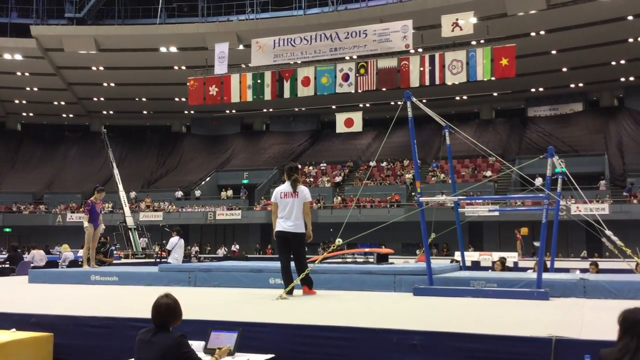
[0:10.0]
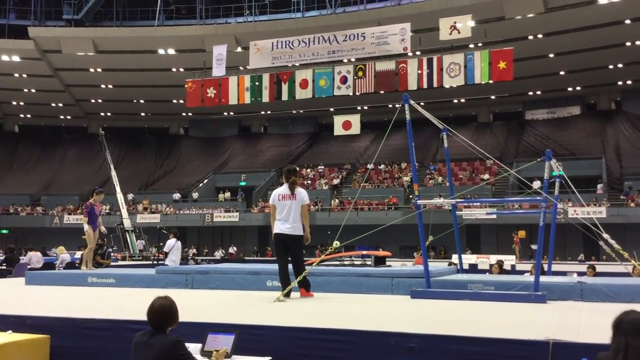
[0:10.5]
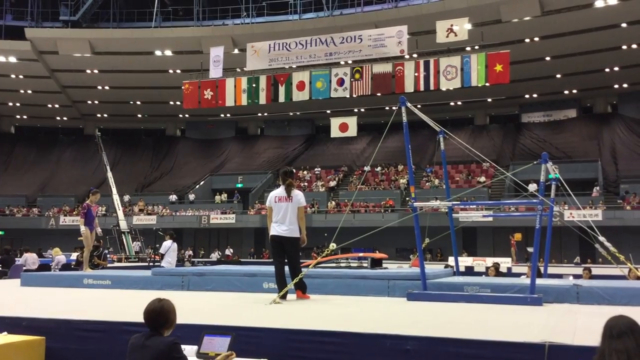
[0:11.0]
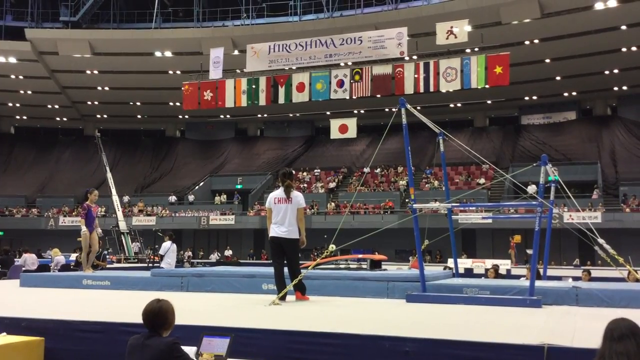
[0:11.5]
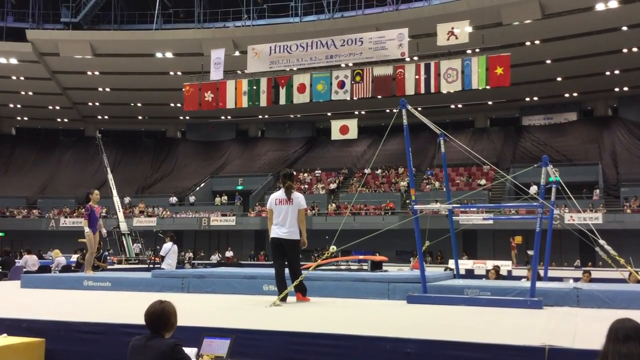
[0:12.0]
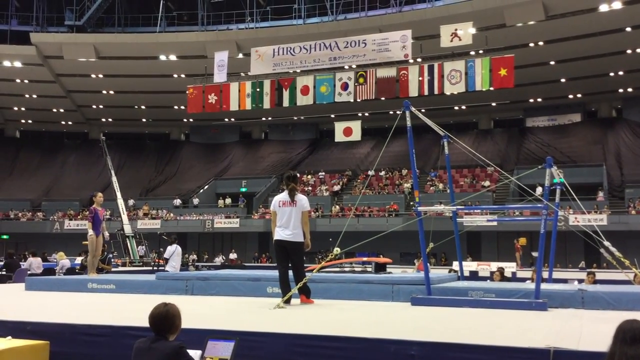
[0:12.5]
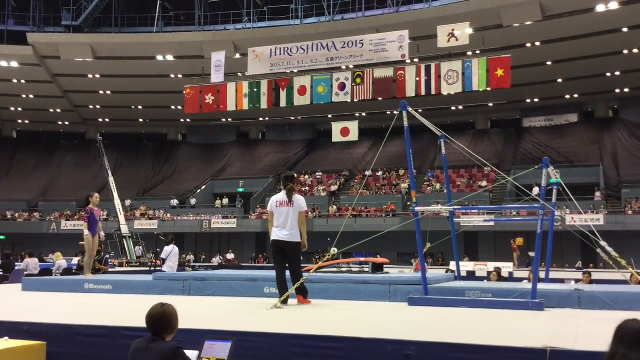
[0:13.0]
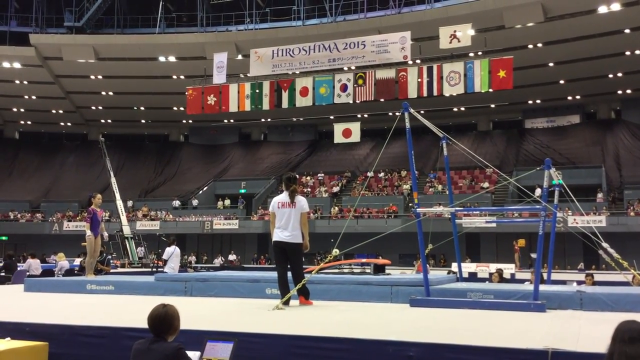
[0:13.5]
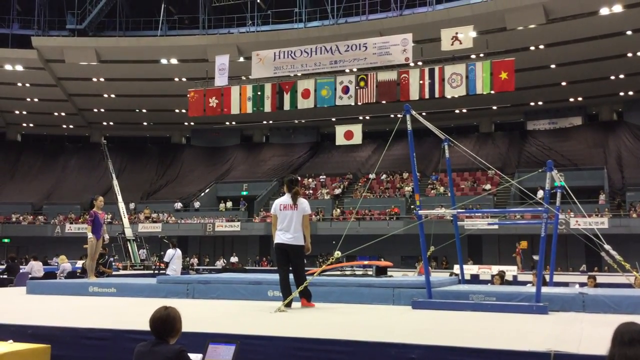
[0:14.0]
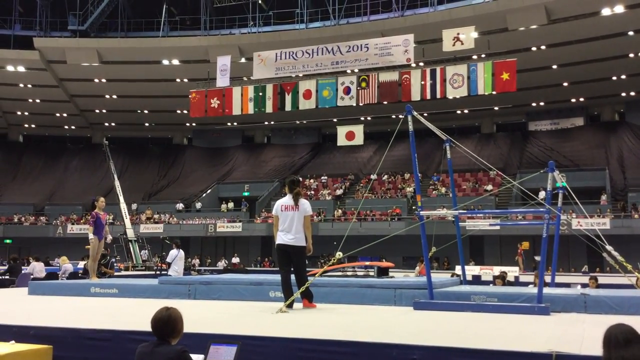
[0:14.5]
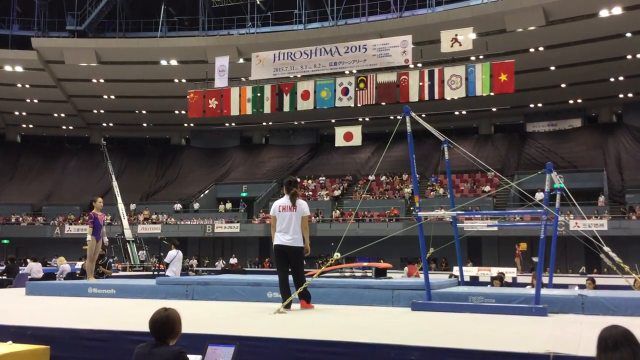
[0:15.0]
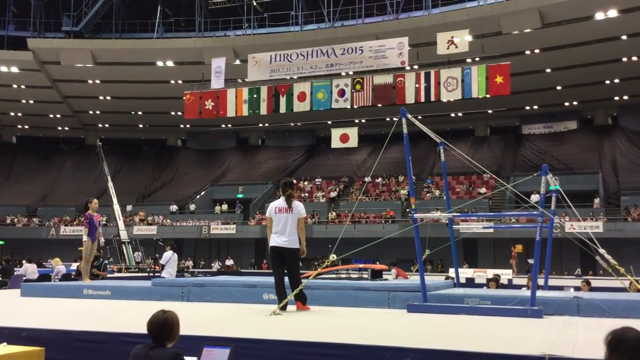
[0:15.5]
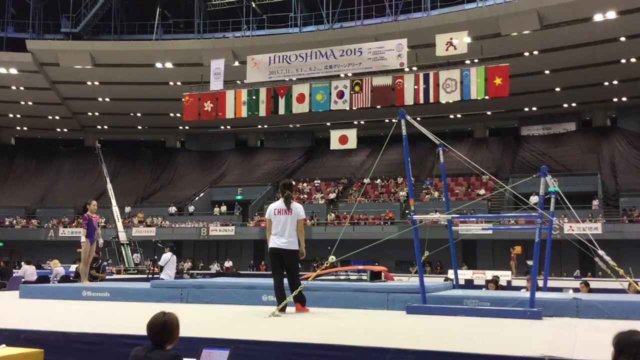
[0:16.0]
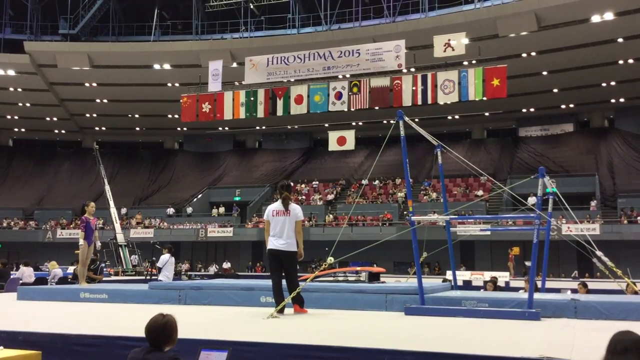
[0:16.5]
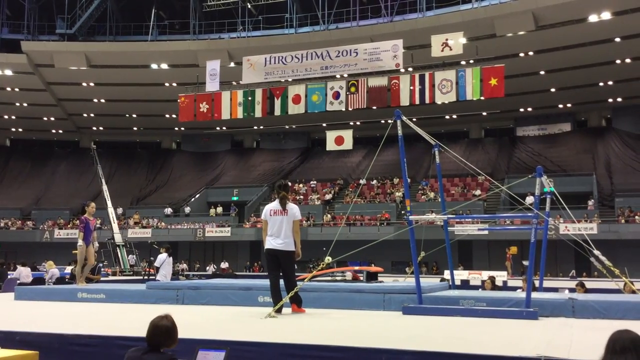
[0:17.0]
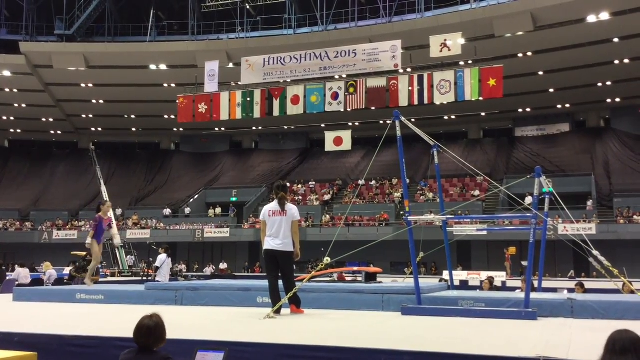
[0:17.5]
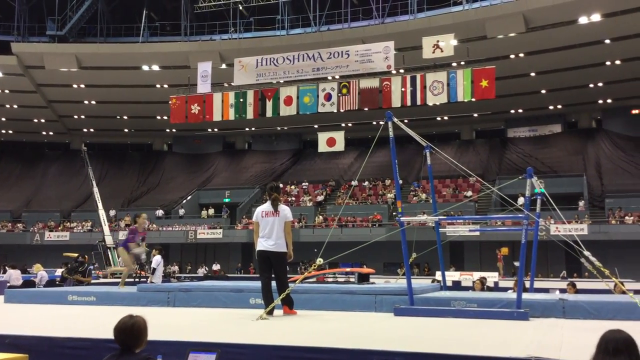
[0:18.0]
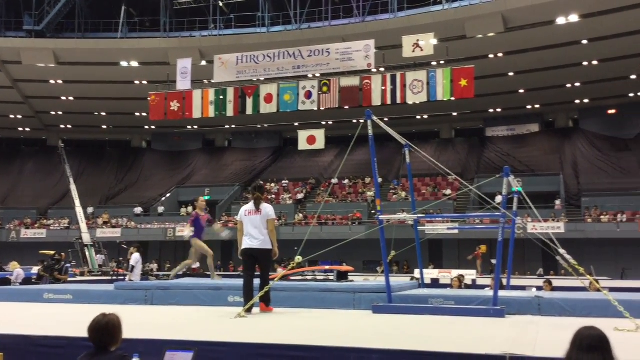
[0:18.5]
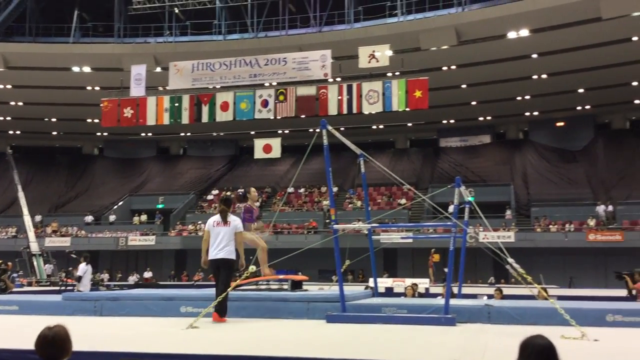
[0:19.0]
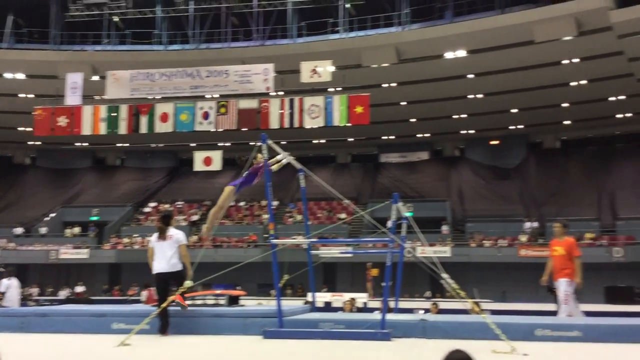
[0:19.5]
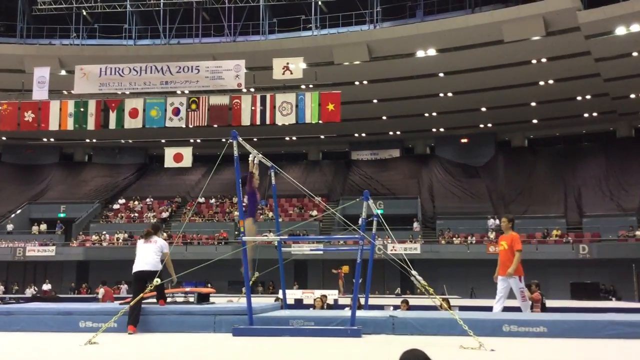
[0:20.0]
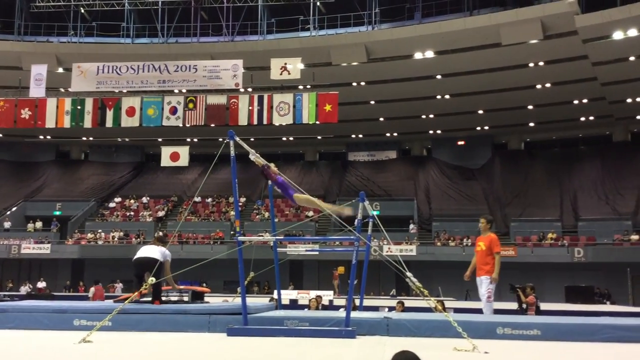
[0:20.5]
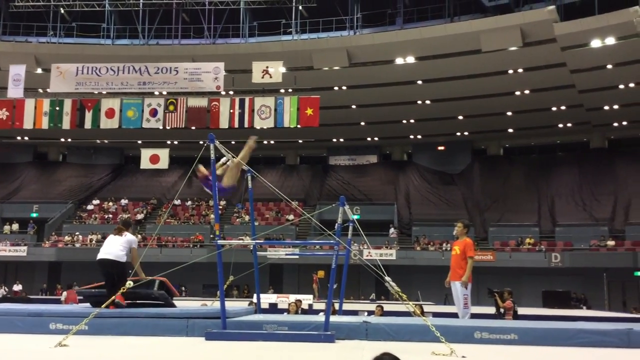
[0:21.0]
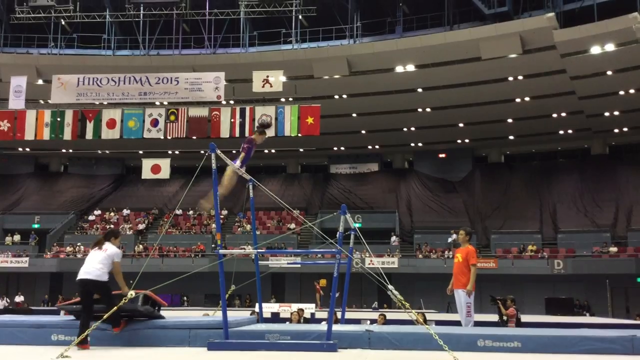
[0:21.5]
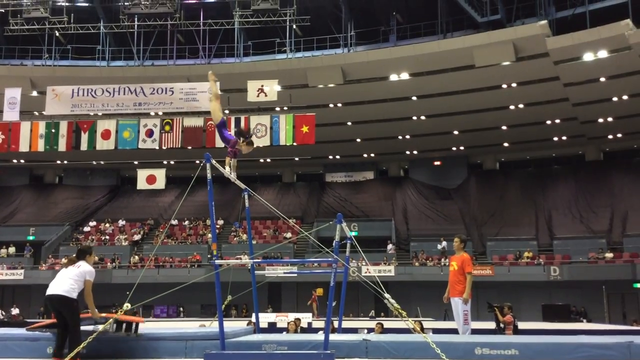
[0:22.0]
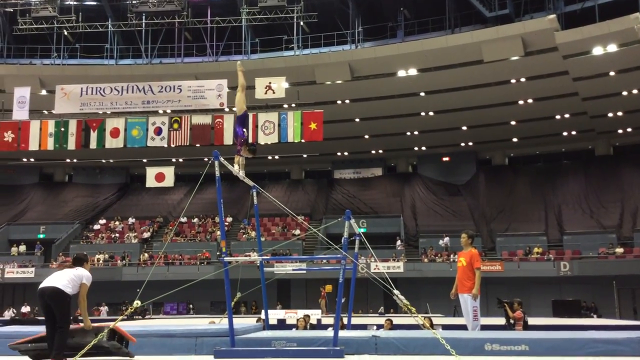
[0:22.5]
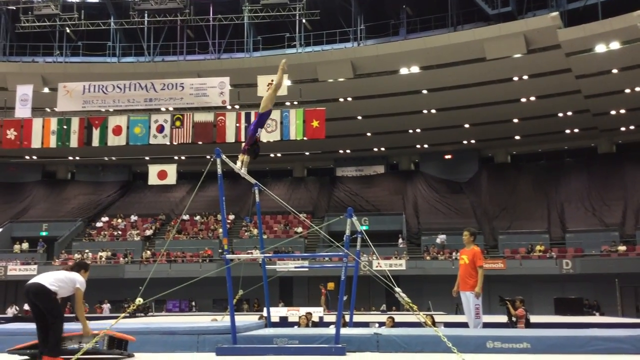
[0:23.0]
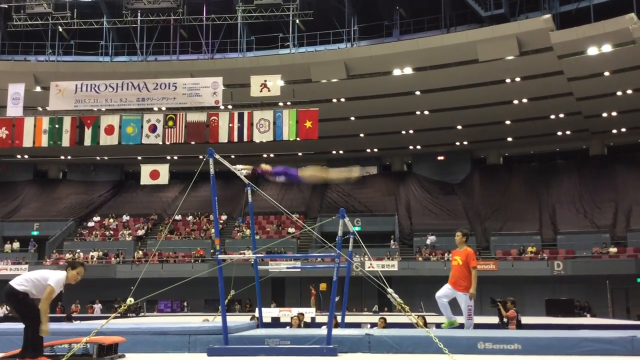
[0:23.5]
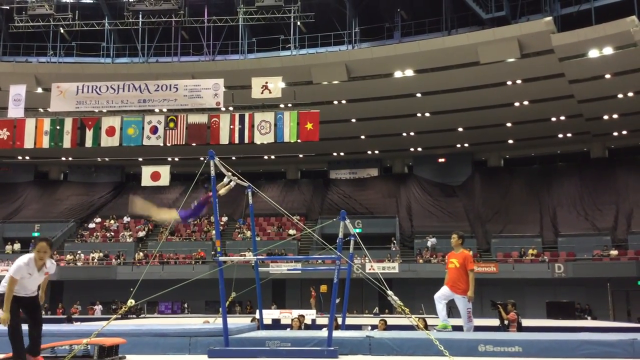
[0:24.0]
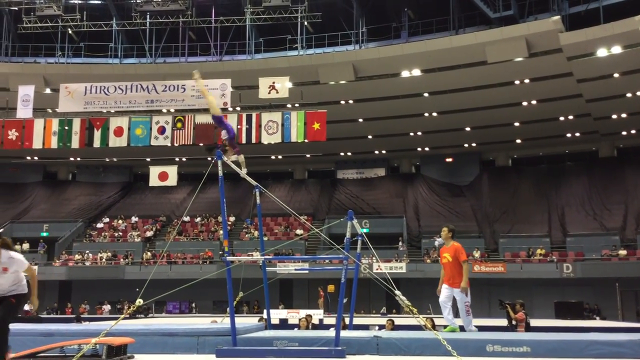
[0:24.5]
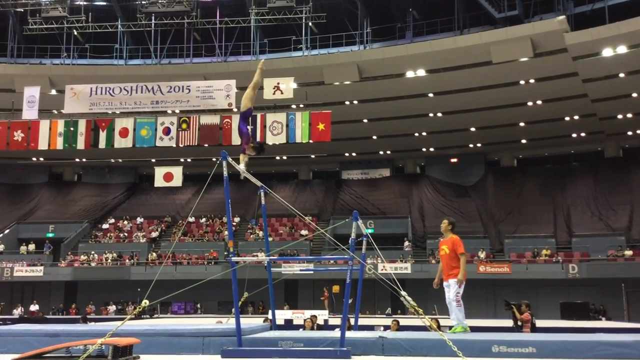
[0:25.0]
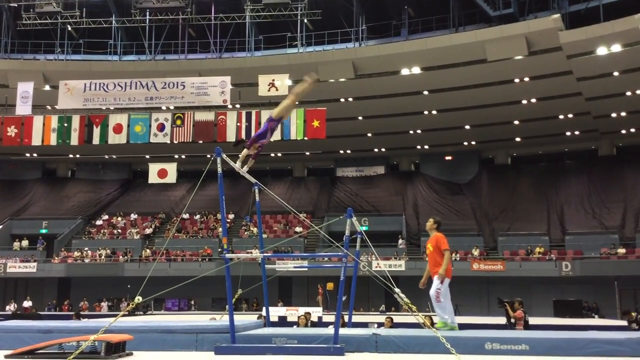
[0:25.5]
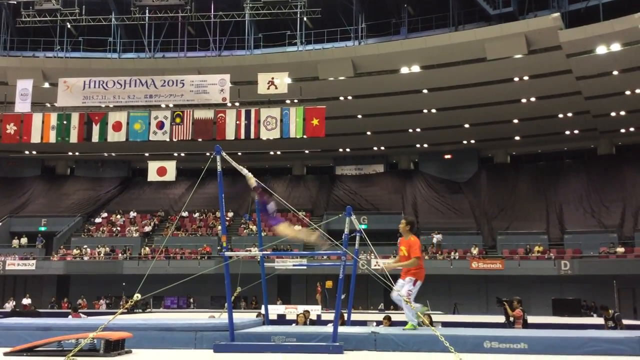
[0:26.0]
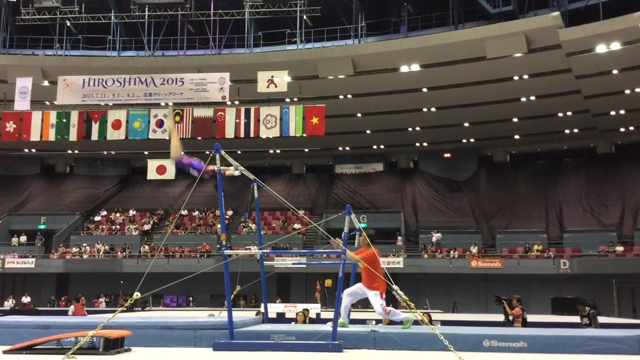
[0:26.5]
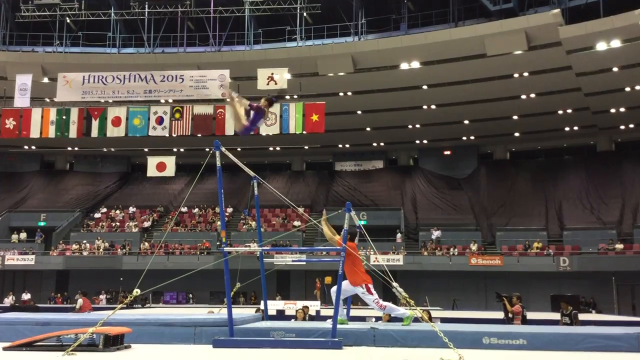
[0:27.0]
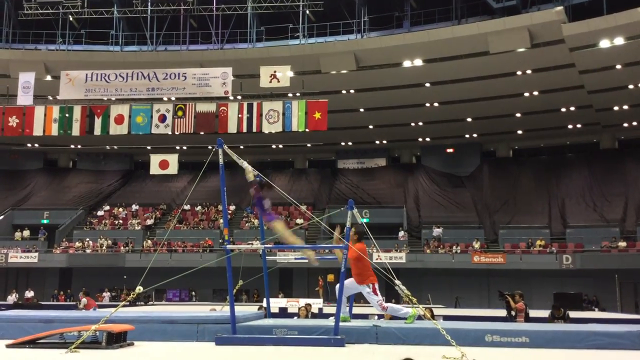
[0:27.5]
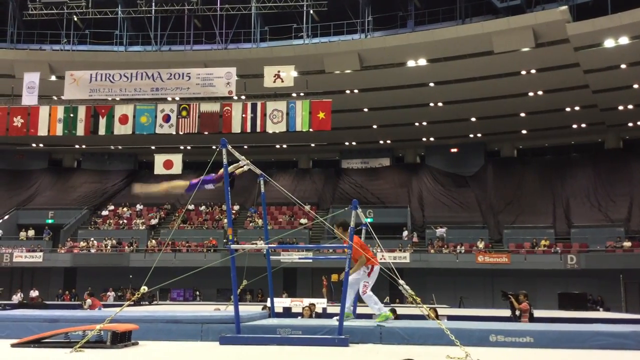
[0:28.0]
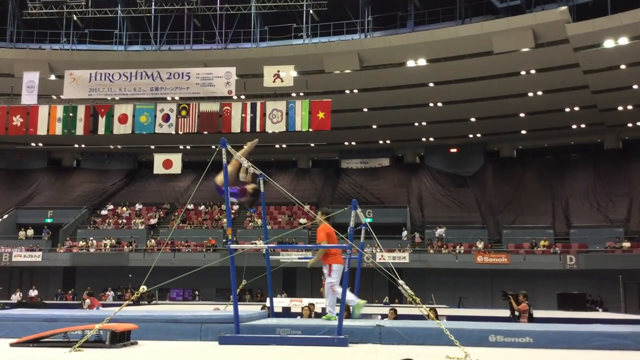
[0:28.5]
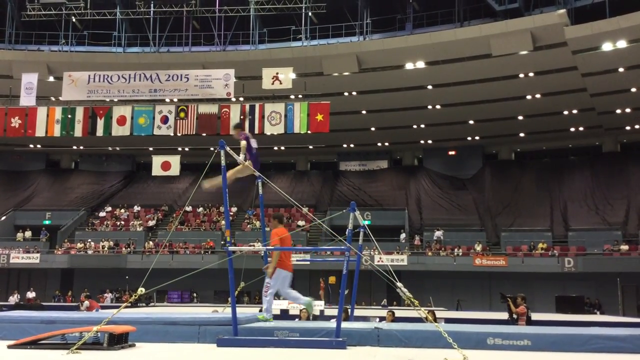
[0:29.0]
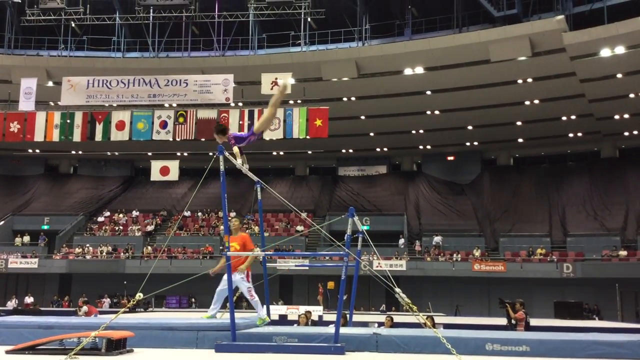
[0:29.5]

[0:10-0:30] A gymnastics performance is about to take place. A girl on the left runs and hops up from a little trampoline onto the uneven bars. She spins and does flips, going from one bar to the other; sometimes she bends her body in and sort of circles around the top uneven bar, spinning. She appears very confident and skilled. As the girl gets up on the bars, her coach moves forward and removes the trampoline, and then a spotter, like a coach, comes in at the side for protection. The audience is in the background in the upper middle area.